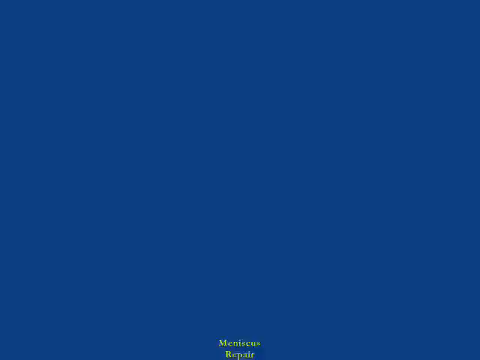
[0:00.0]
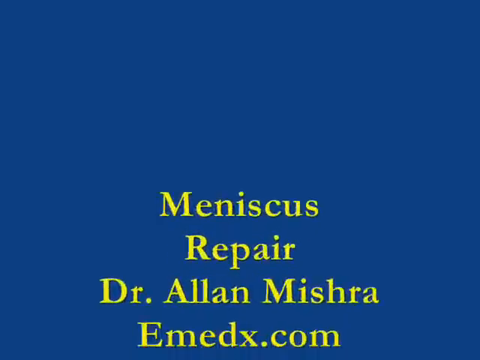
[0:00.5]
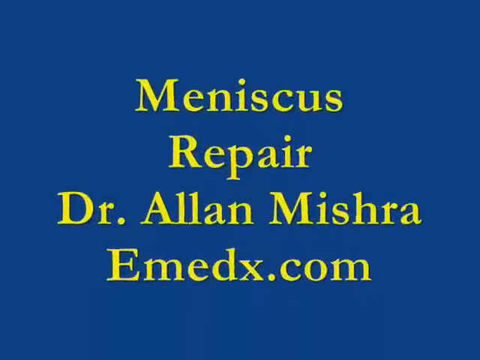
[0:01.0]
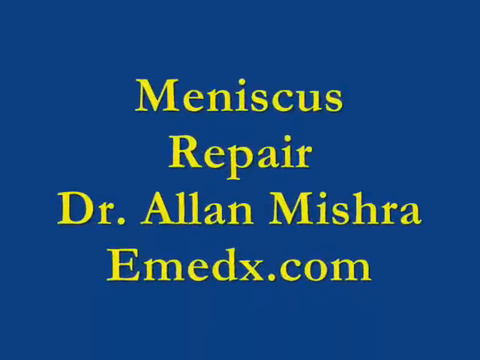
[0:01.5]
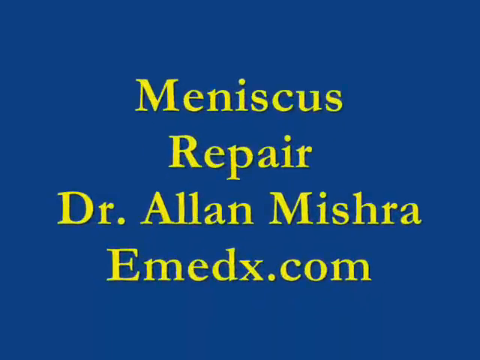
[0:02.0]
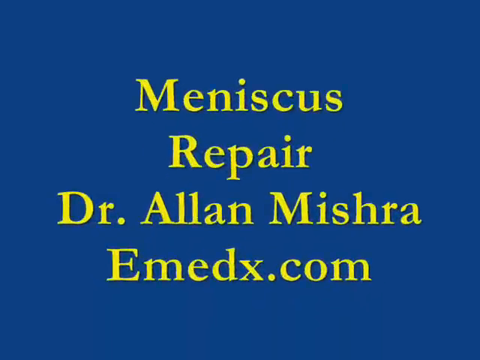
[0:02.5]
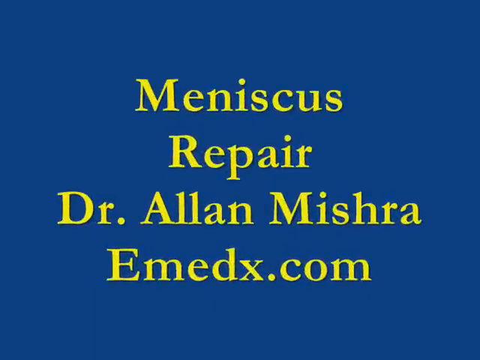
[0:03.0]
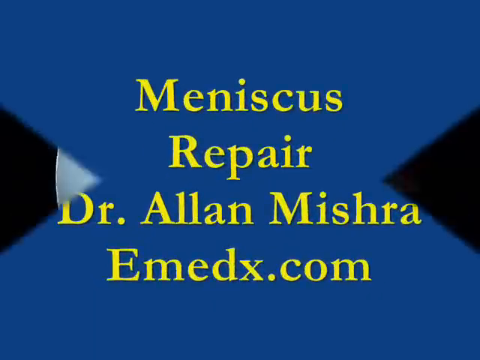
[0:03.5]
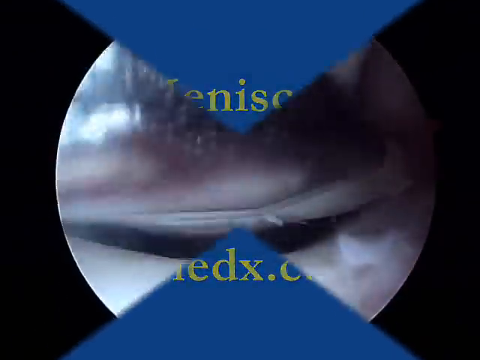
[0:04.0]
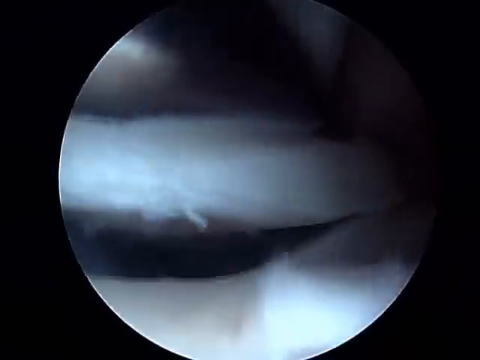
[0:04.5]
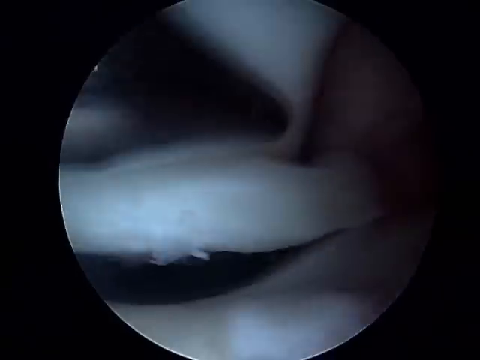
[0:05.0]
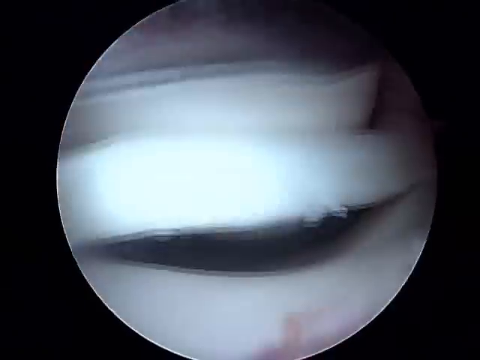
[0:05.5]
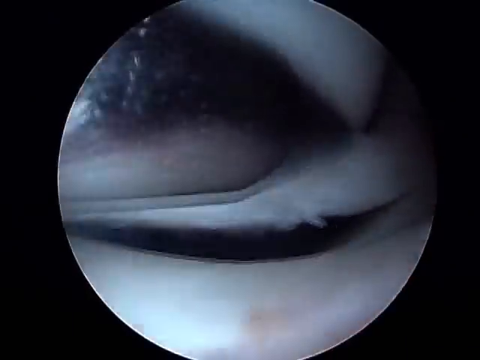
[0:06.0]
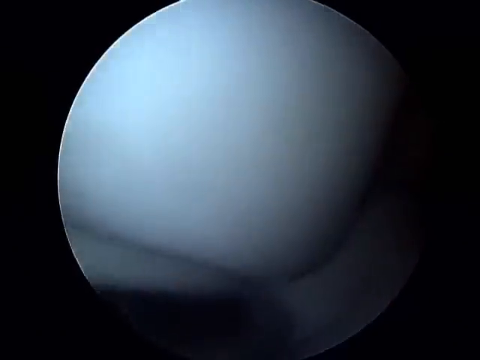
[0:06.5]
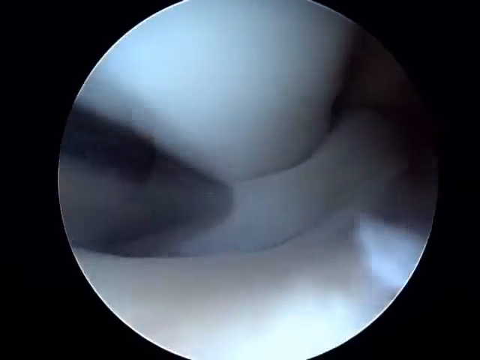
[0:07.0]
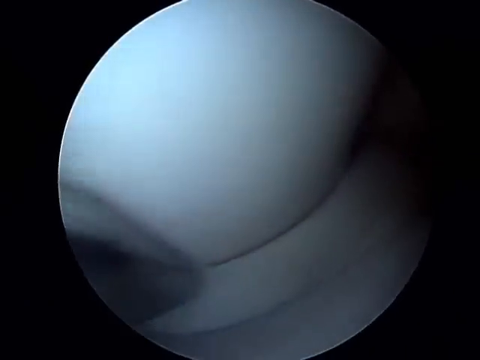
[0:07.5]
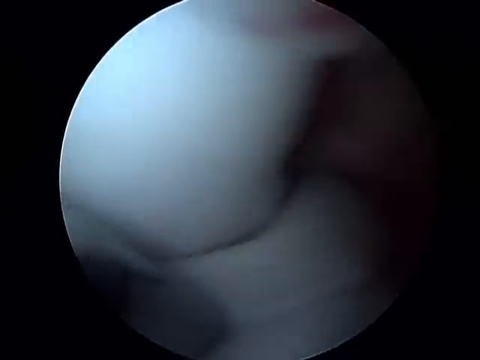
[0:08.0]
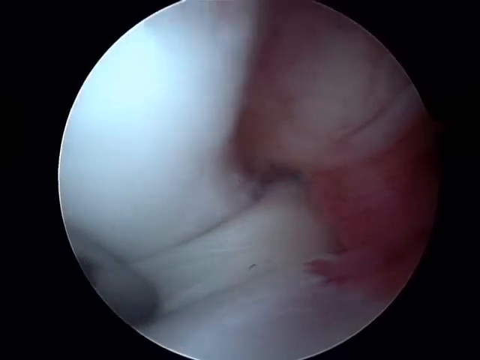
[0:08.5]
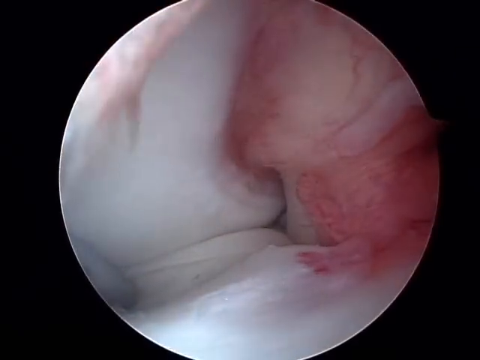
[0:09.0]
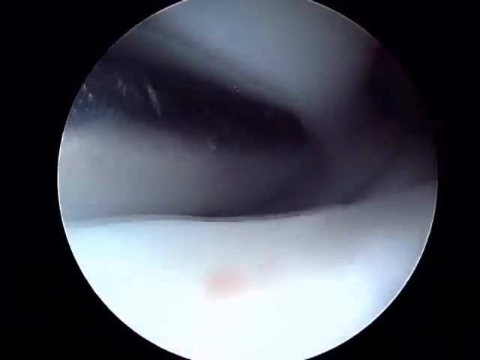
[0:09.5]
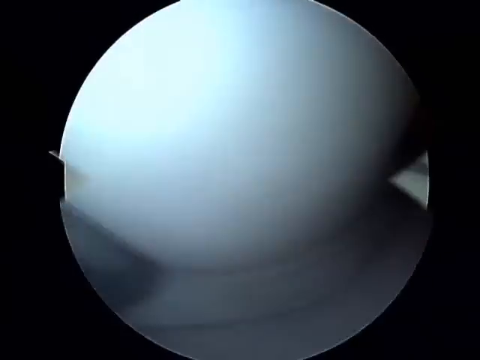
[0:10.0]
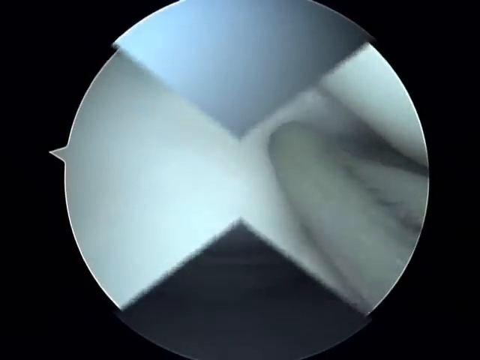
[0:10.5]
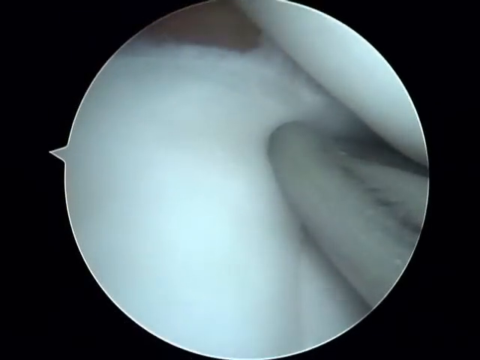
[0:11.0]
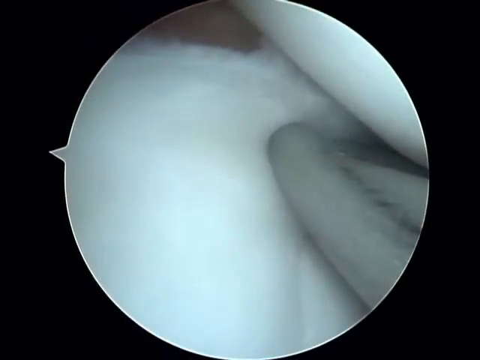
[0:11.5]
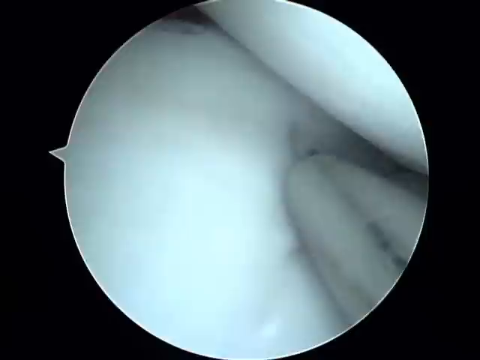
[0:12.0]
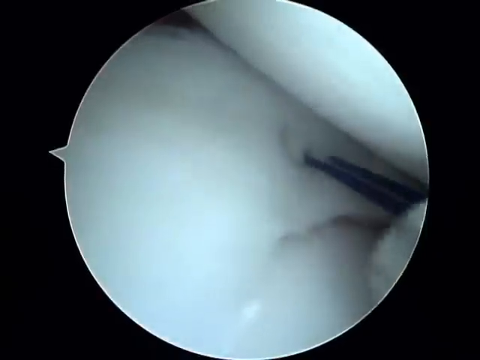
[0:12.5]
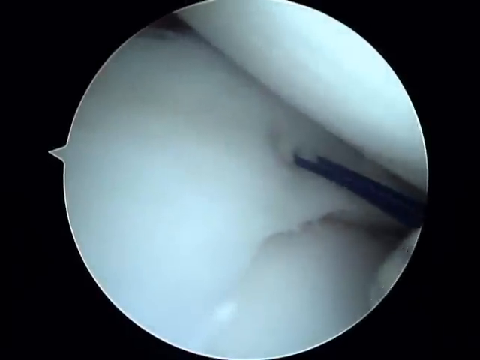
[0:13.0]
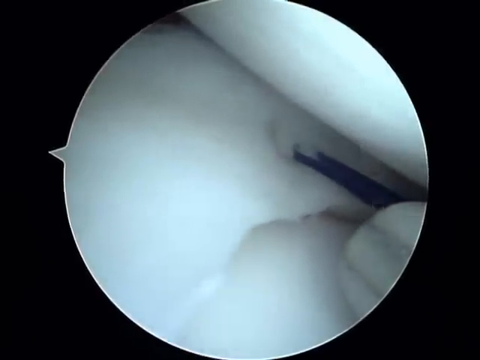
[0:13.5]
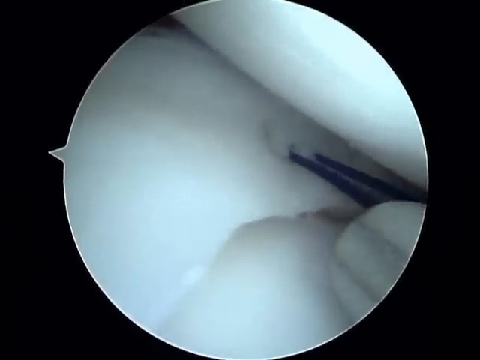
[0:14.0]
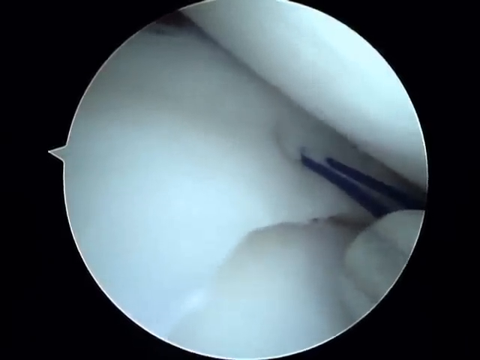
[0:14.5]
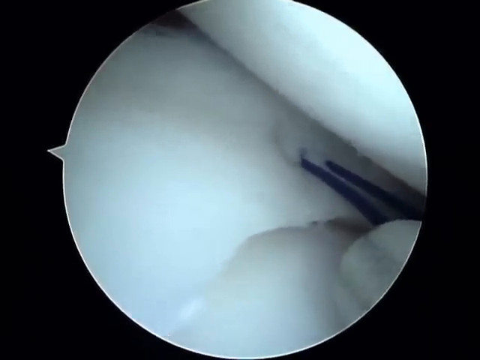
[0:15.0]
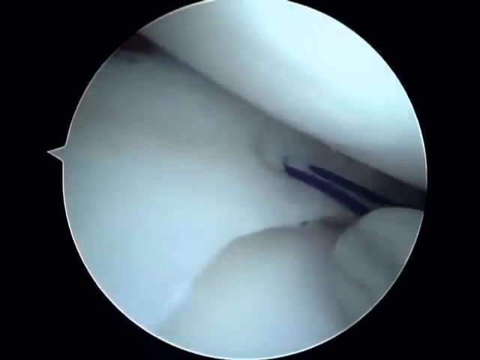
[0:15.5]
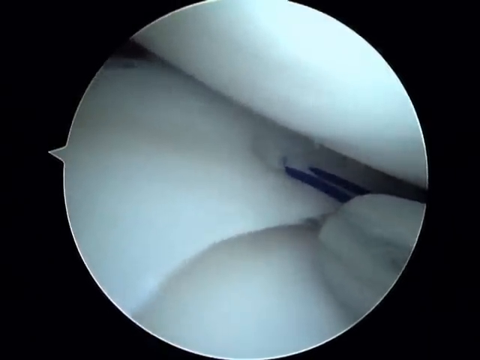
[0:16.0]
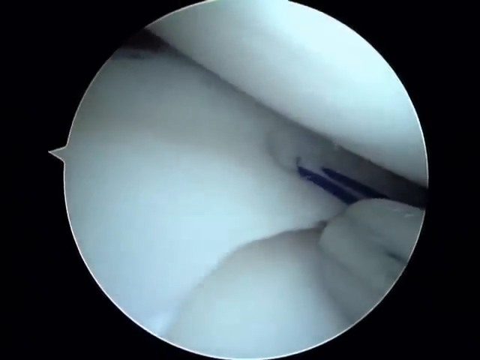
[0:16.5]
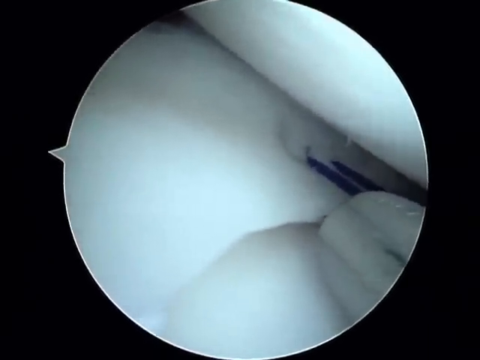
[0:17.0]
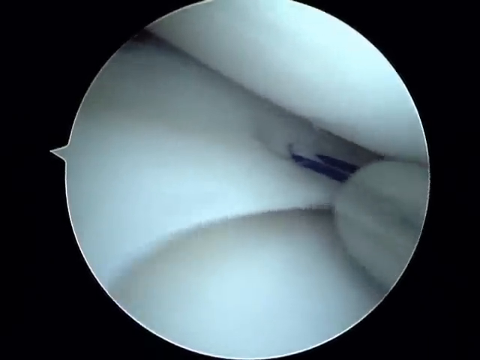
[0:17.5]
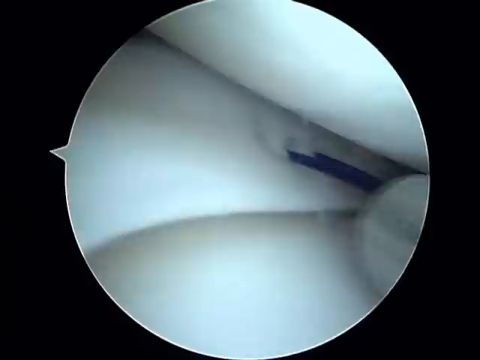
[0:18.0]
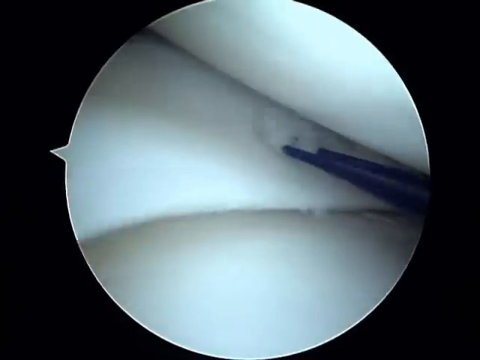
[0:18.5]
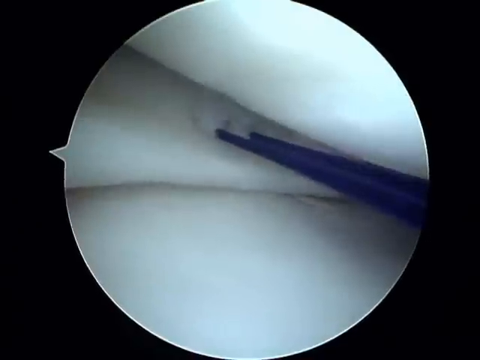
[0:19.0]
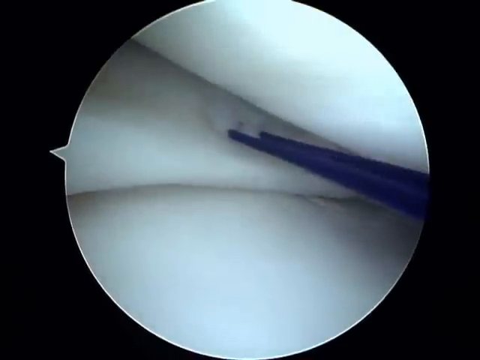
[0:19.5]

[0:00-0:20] The video opens on a blue background where yellow text appears, reading "meniscus repair dr alan mishra medx.com". It then transitions to what appears to be a keyhole surgery camera view, in which what are apparently the surgeon's metal instruments move around different structures within the body that look to be white, with a little bit of blood. The view then changes to a different angle of the keyhole surgery, where what appear to be blue stitches are being put in place by the surgeon. The screen then changes to a plain blue background. There is no text of any sort on the screen while the procedure is shown; it is purely the internal camera view the surgeon would see and use to perform the operation.